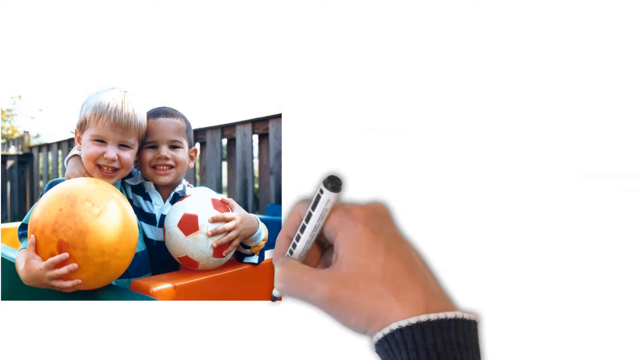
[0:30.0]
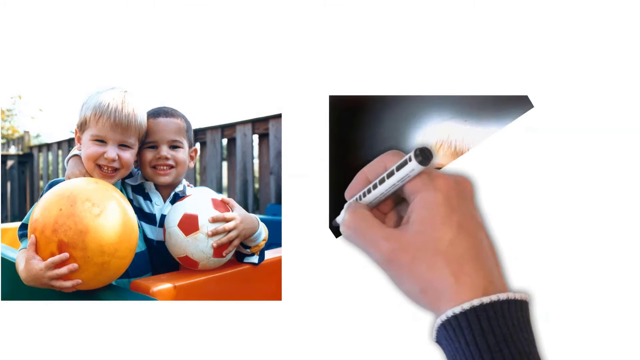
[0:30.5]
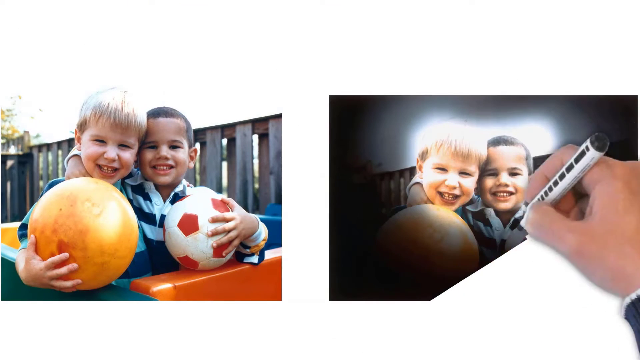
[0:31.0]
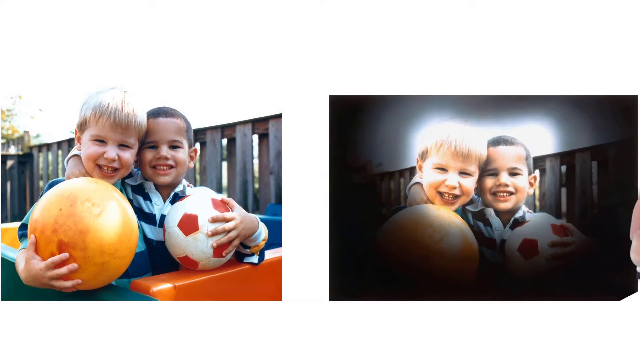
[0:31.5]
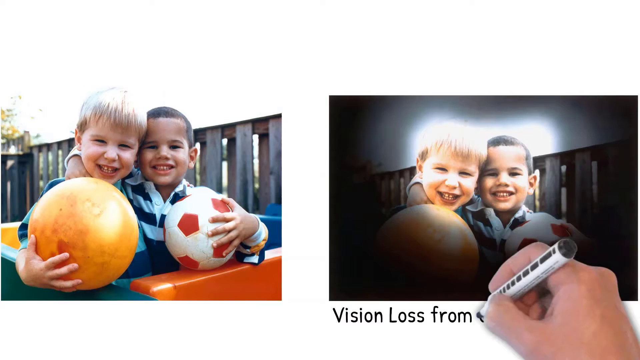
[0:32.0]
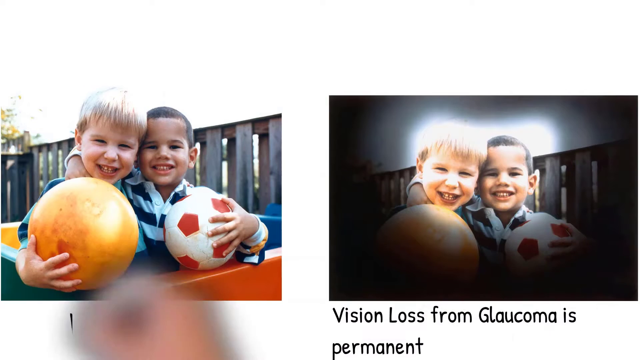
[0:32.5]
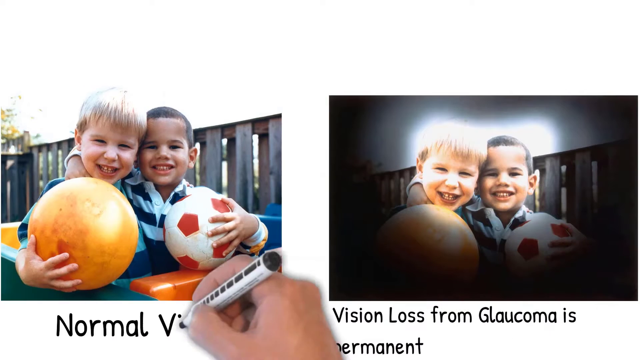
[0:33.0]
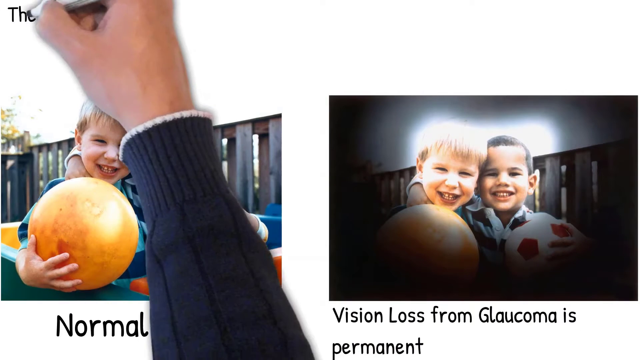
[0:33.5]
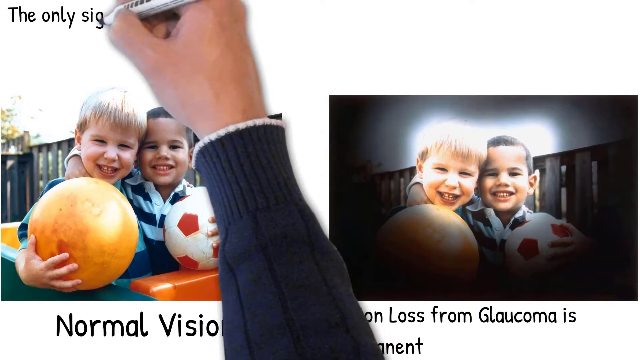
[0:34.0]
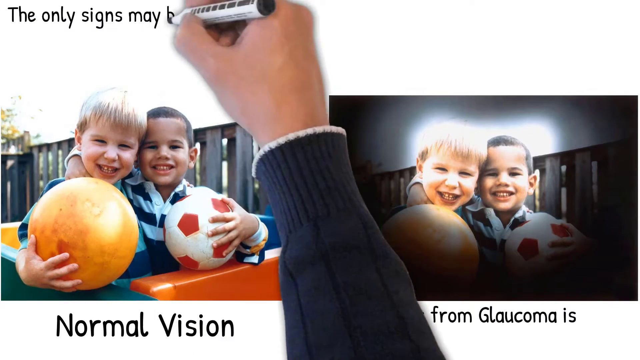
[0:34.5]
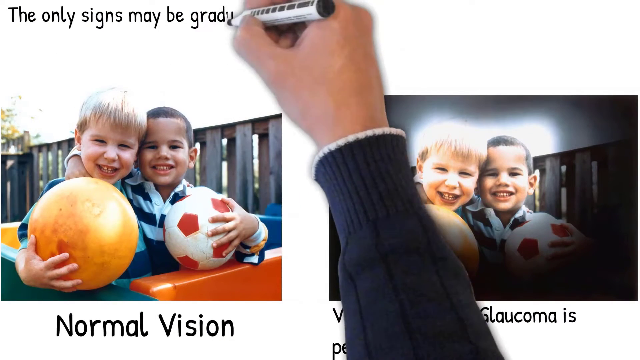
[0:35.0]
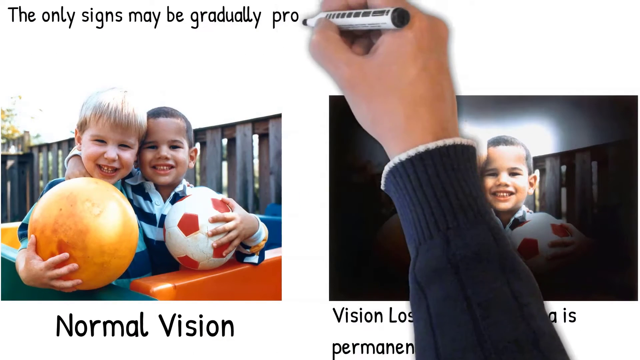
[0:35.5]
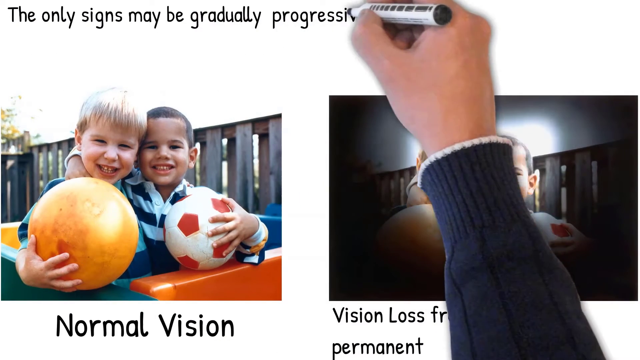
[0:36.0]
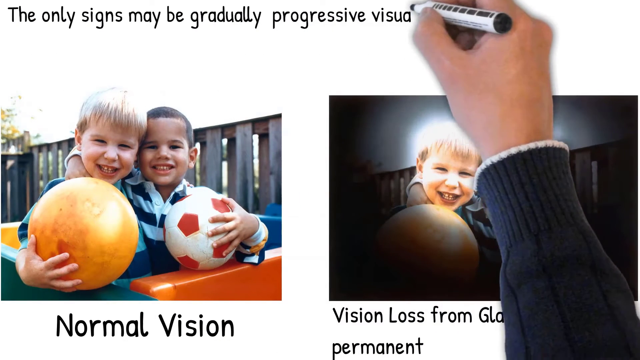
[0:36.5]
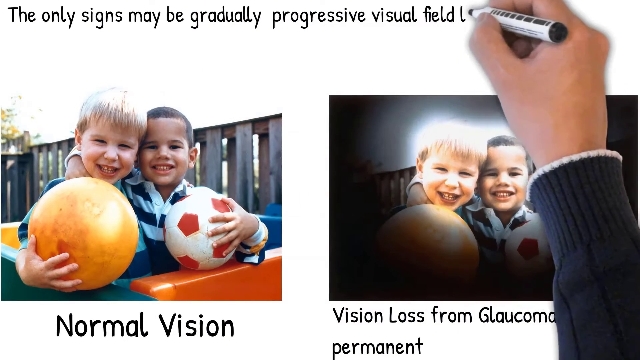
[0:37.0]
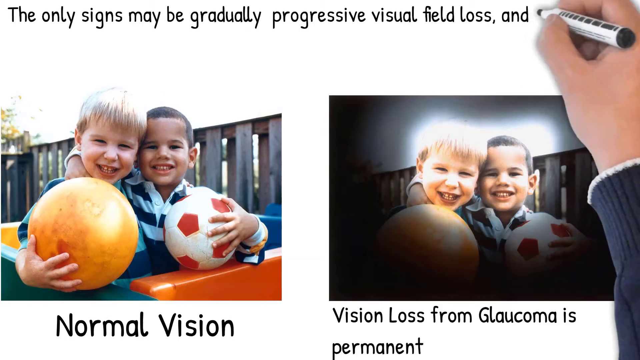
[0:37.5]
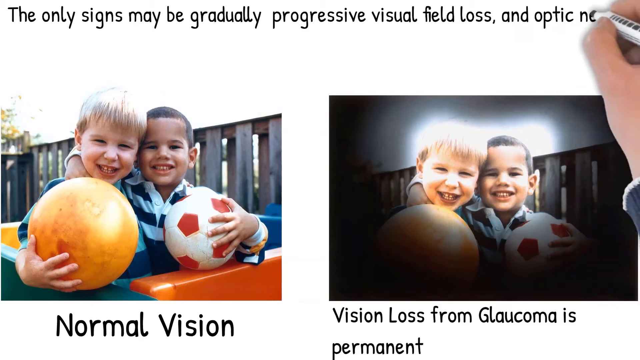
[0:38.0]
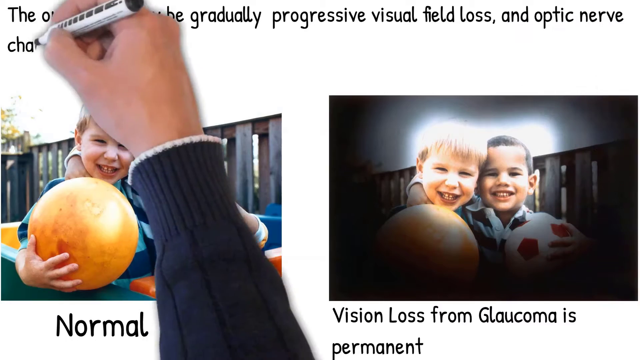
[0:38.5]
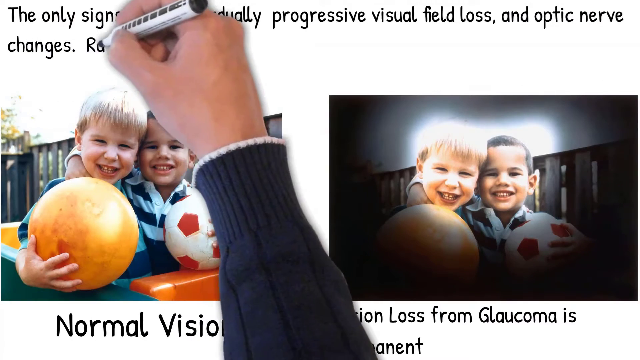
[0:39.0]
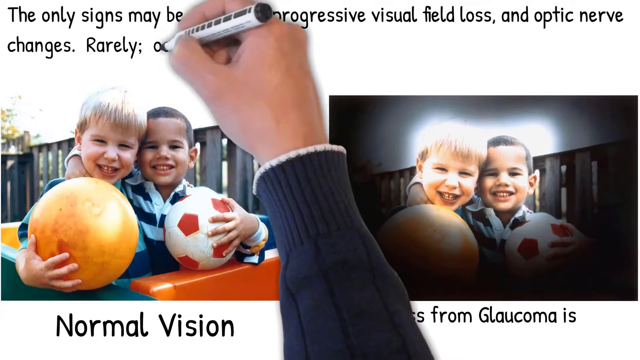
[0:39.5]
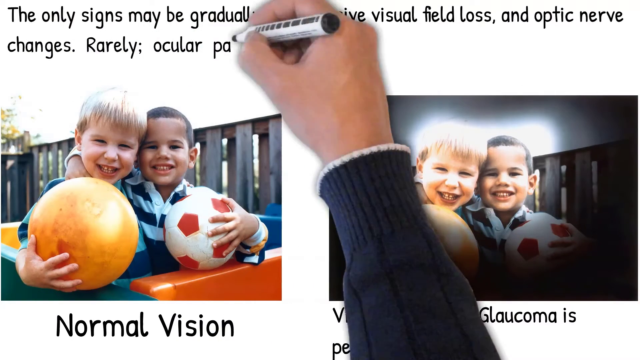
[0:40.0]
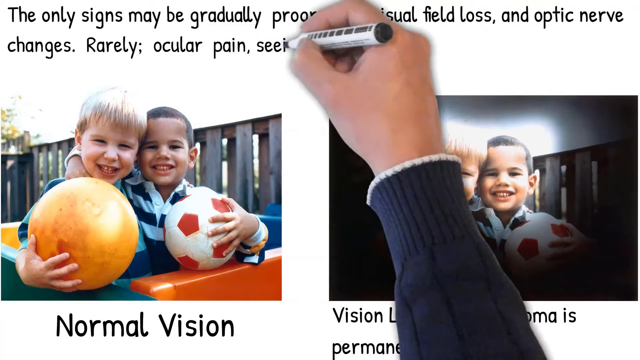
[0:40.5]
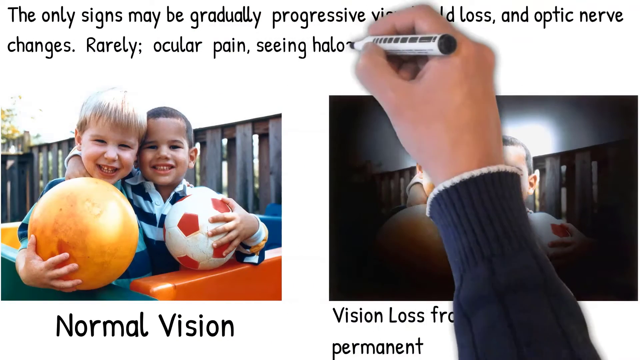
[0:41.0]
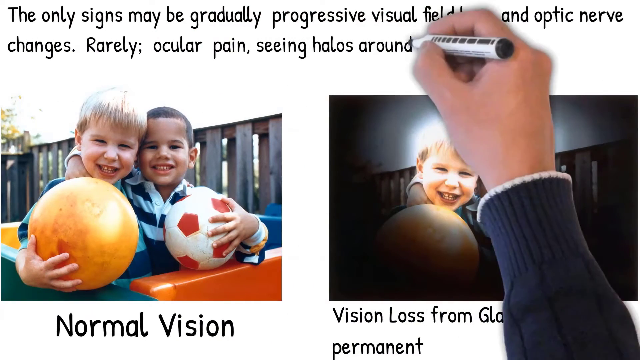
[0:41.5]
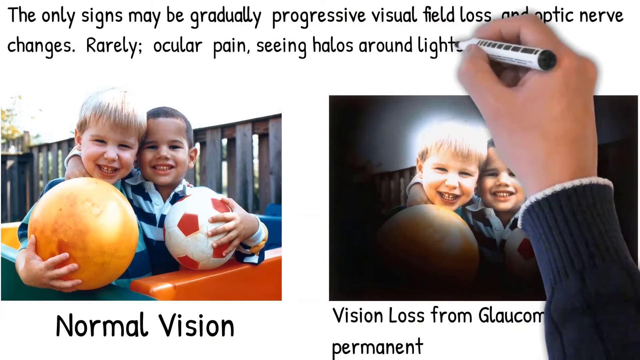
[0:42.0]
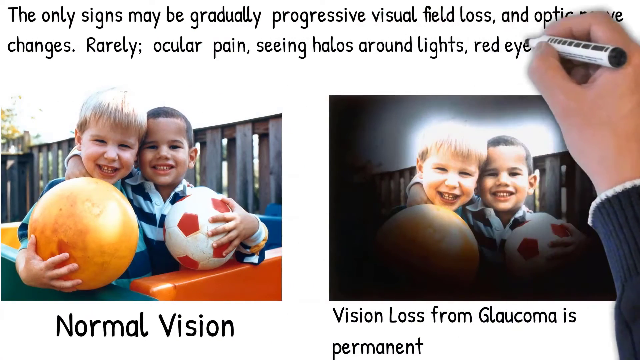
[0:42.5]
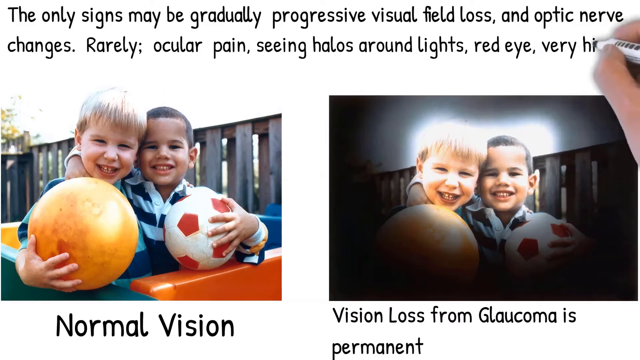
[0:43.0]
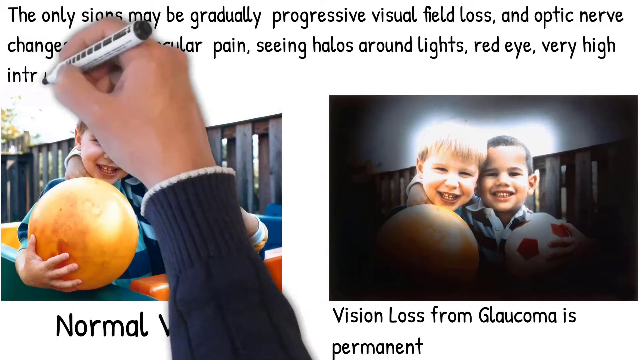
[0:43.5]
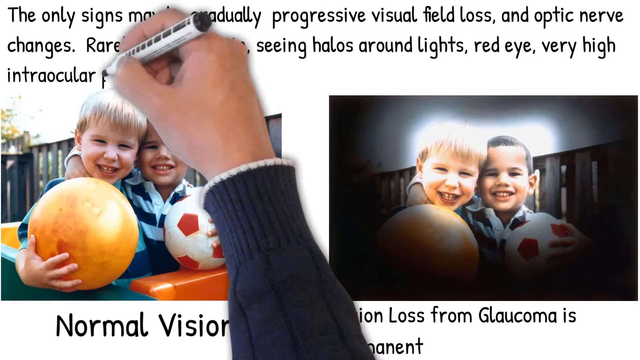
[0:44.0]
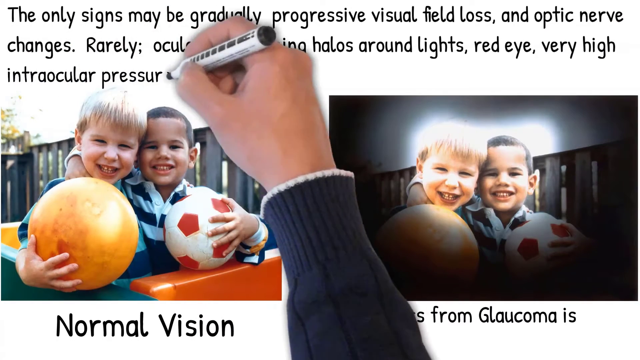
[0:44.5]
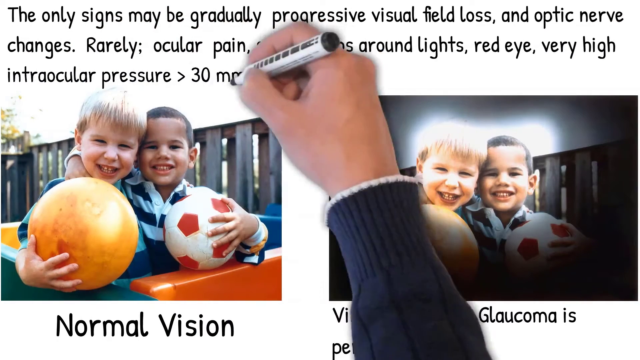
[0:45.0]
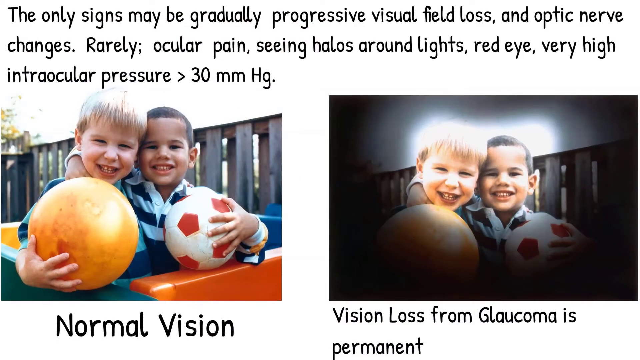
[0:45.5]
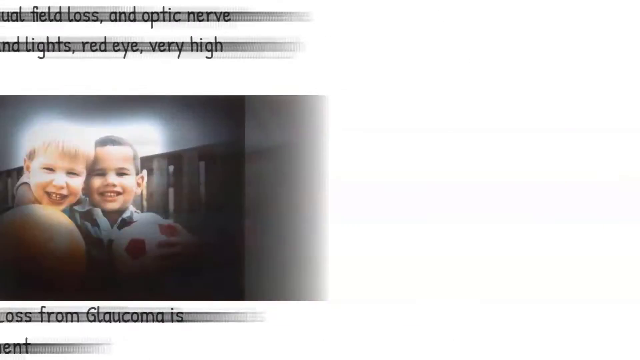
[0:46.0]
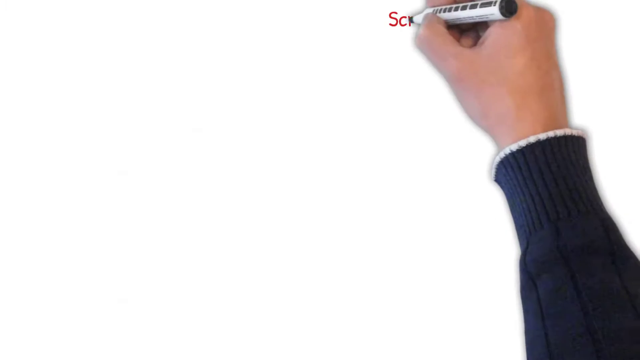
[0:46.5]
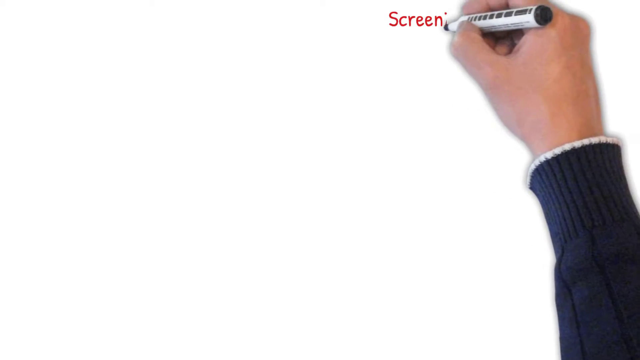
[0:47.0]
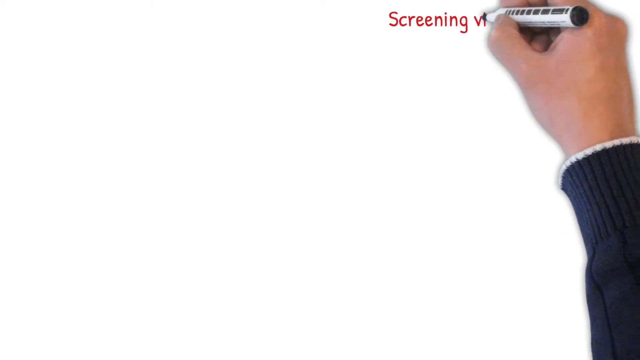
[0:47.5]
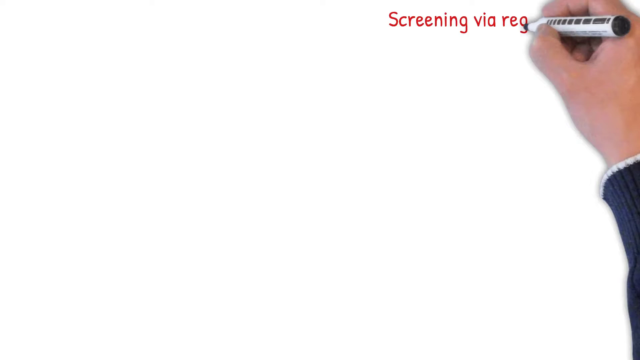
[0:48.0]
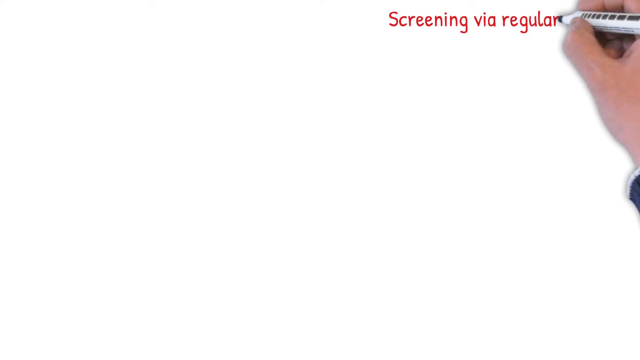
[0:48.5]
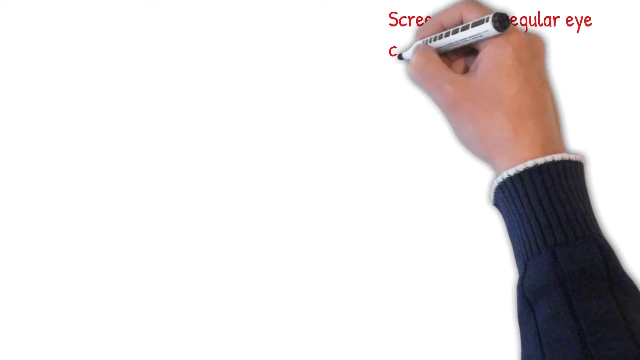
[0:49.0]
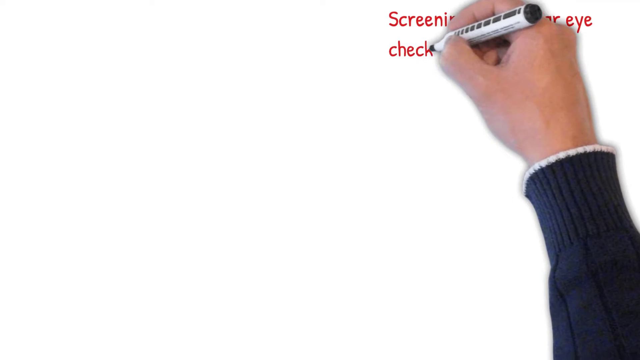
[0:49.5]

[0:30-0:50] On the left-hand side of the screen, the hand creates an image of two children next to each other, each holding a ball. The child on the left is white and blonde and holds an orange ball; the child on the right is black with short hair and holds a white and red ball. The image is clear. The hand then moves to the right-hand side of the page and appears to sketch another image: the same picture, but with the outside clouded over by a sort of black edge, while the middle is bright and perhaps over-saturated. Underneath this picture the pen writes "VISION loss FROM glaucoma IS PERMANENT". It then moves to the image on the left-hand side and writes "NORMAL VISION" underneath it. Text on the page reads "The only signs may be gradually progressive visual field loss and optic nerve changes. Rarely ocular pain. Seeing halos around light. Red eye. Very high intraocular pressure. Over 30 mg Hg." The hand moves to the next page.